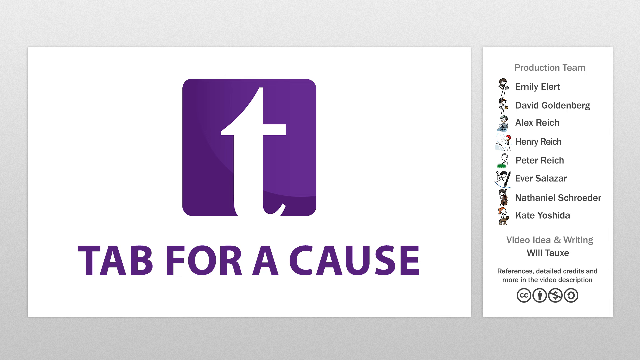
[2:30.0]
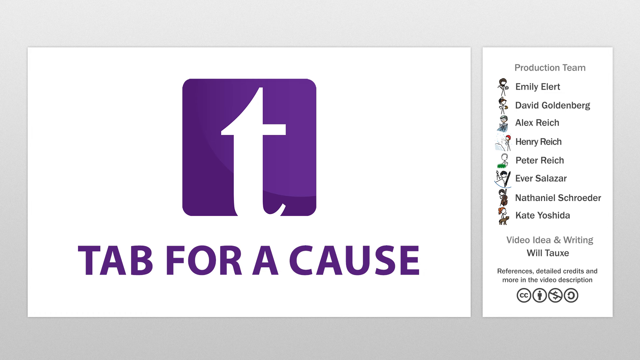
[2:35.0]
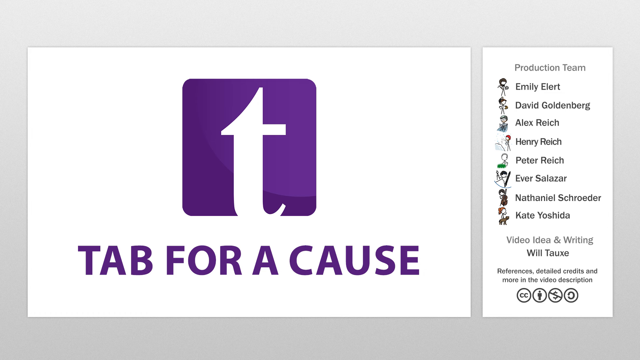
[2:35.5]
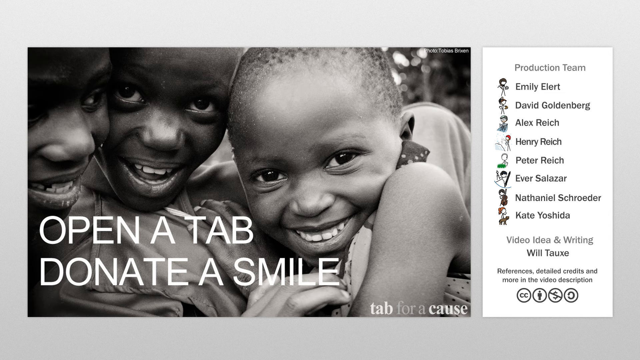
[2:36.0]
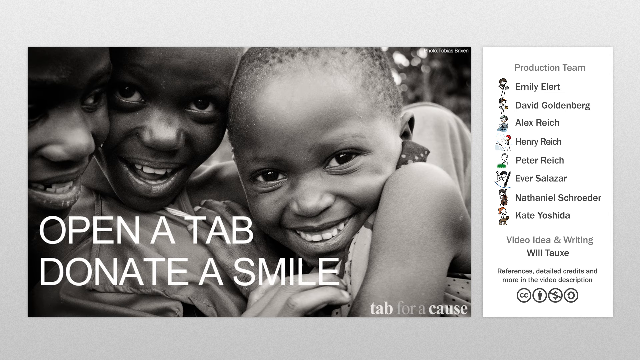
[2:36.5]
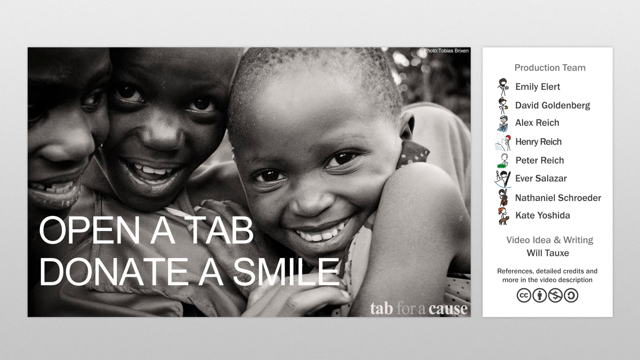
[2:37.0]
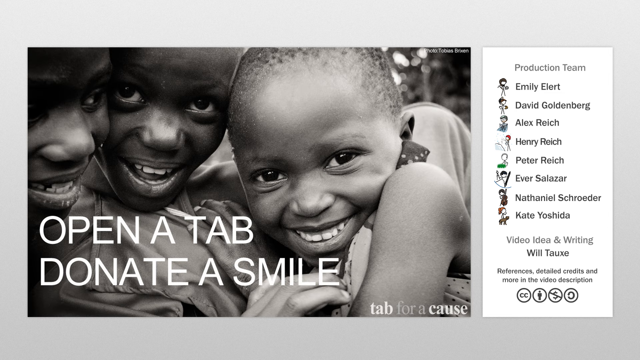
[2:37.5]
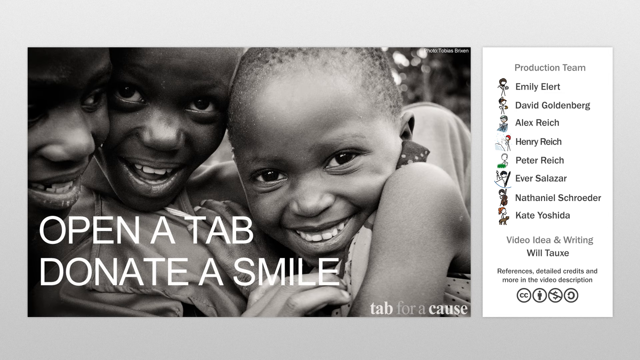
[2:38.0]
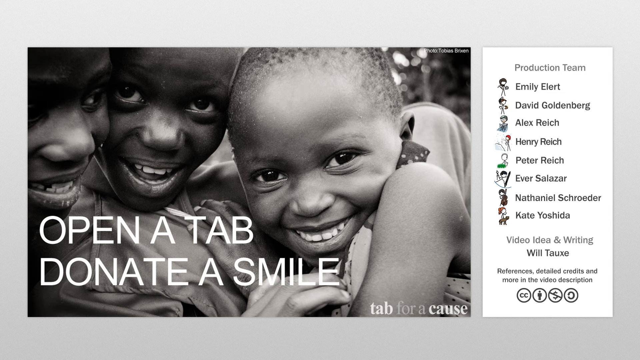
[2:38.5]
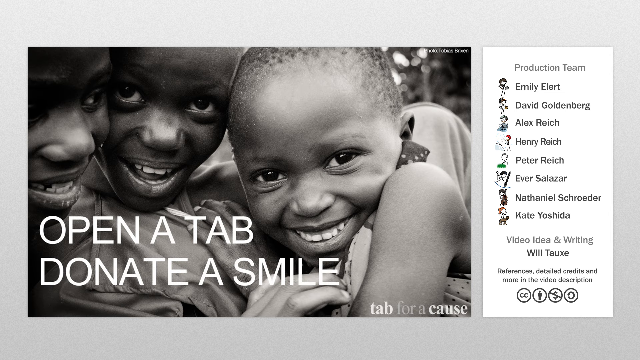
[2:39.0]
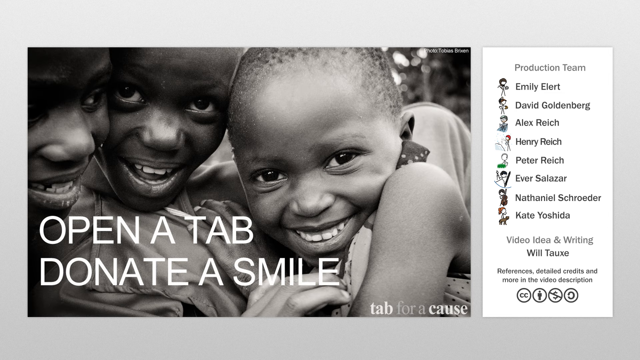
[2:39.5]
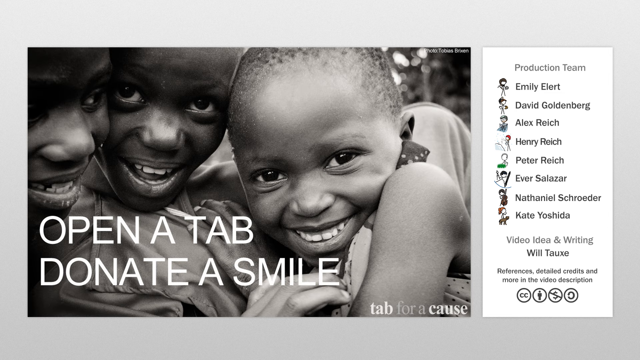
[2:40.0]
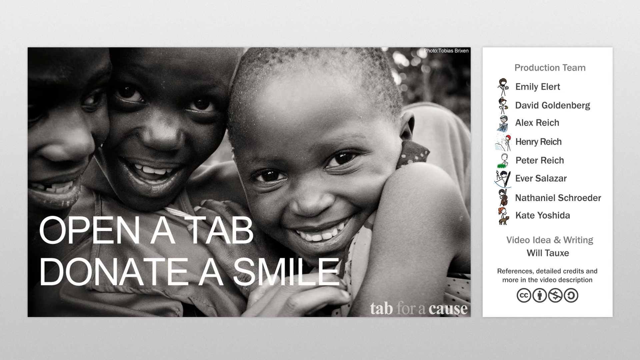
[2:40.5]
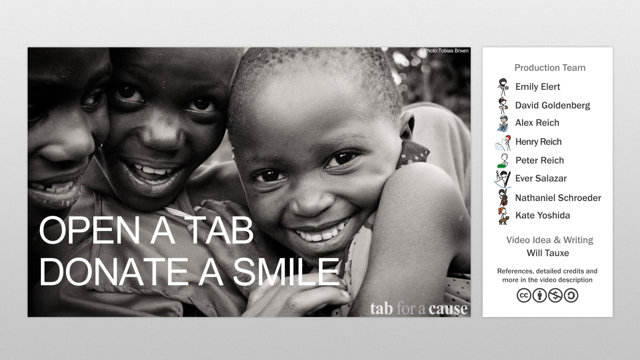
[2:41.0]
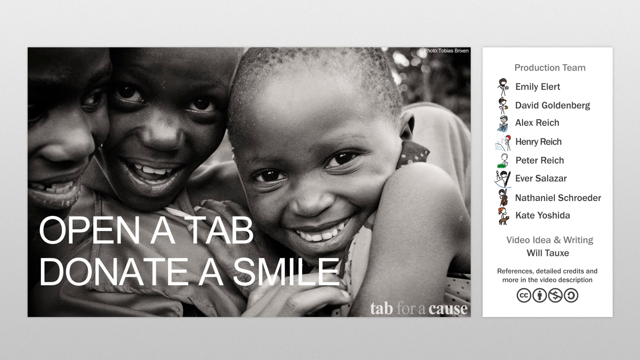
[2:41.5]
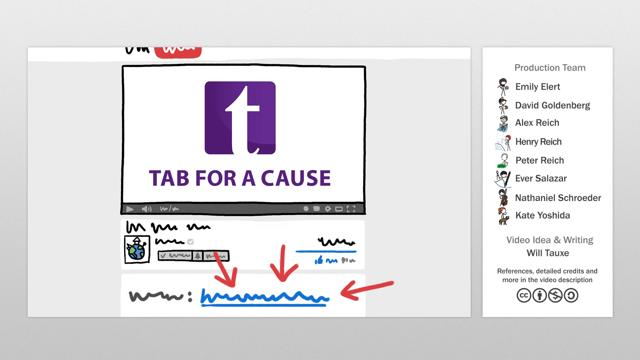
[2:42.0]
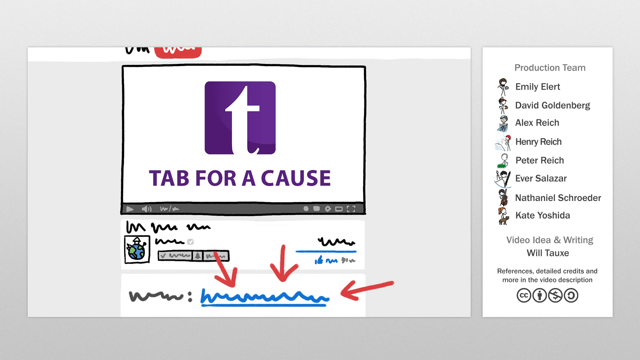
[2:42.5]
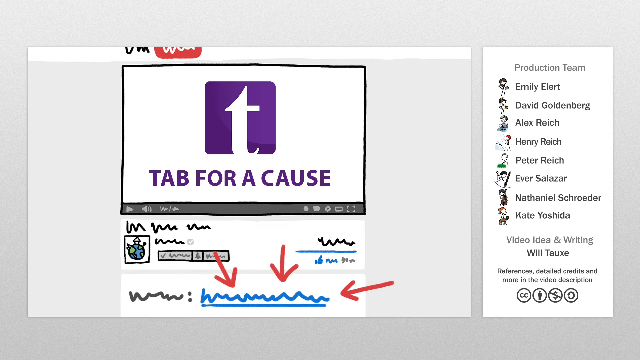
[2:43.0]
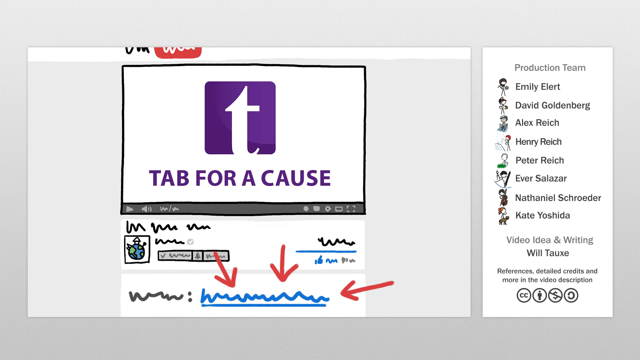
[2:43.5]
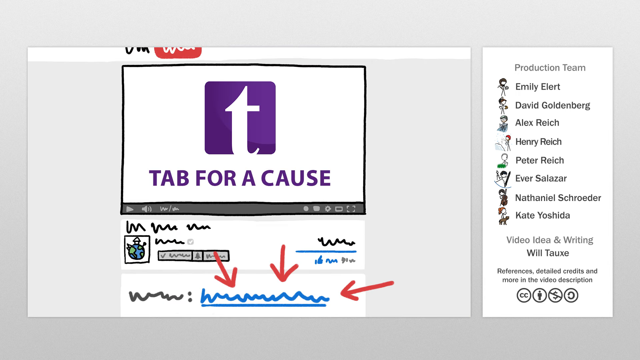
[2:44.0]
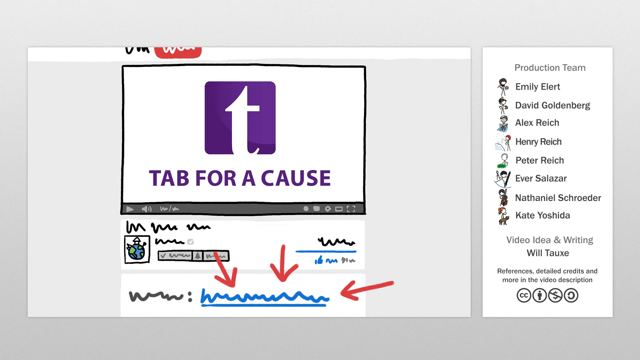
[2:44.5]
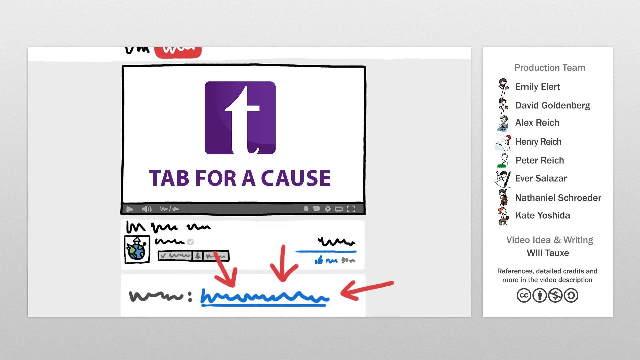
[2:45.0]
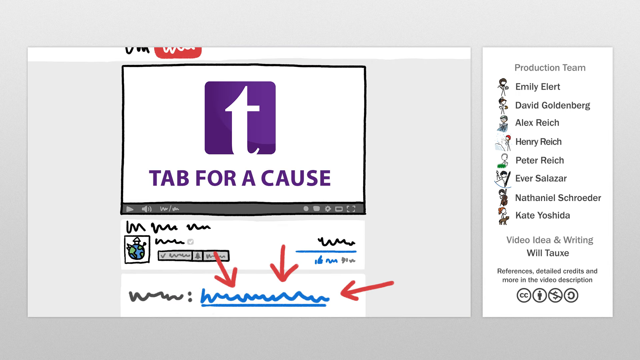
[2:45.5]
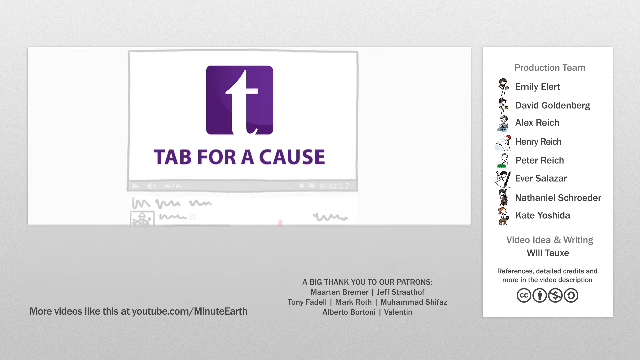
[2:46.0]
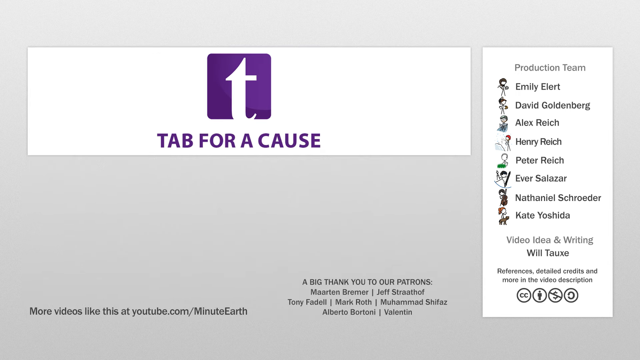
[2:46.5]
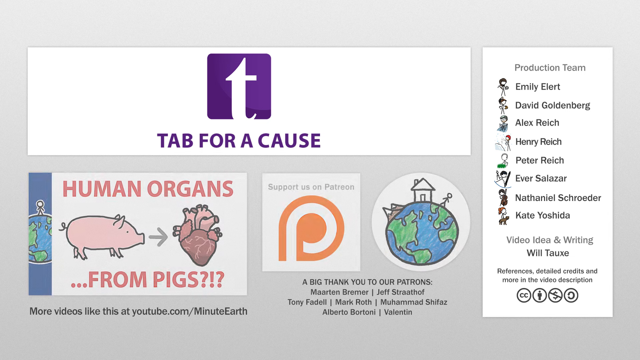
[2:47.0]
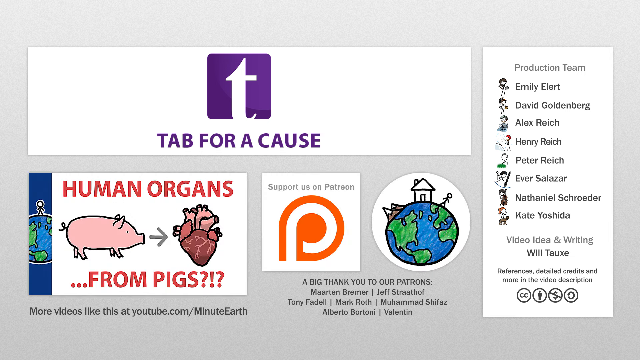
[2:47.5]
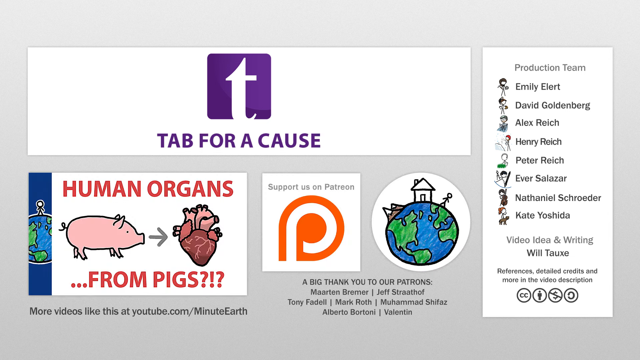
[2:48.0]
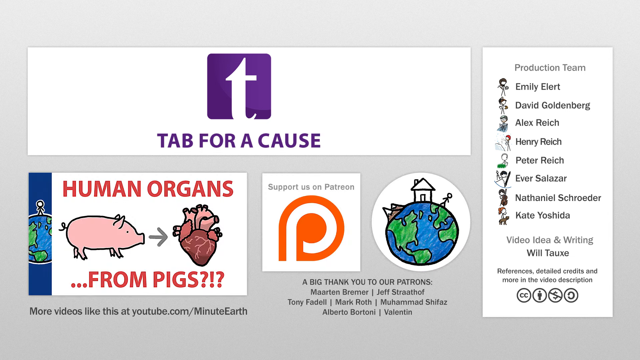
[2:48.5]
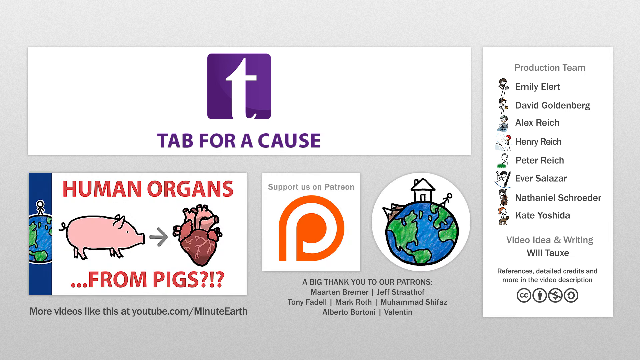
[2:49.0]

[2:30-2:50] The Tab for a Cause screen stays on for a few seconds, then cuts to a still black-and-white photograph of some black children looking at the camera and smiling, with "open a tab, delete a smile" and "tab for a cause" written at the bottom. After a few seconds it changes to another screen showing "tab for a cause" in what seems to be a cartoon version of the first screen, with cartoon writing and red arrows pointing to the bottom of the screen to highlight something in blue there. This shrinks, and "tab for a cause" becomes proper writing and shrinks up to the top of the screen. A thumbnail appears with a drawing of a pig and an arrow coming from the right of its nose pointing to a heart, with the words "human organs from pigs?!". To the right of that is "supporters on Patreon", and to the right of that a picture of the earth with a stick man at the top, a white house with one door at the very top, and mountains to the left of the house. The screen then says "a big thank you to our Patreon".